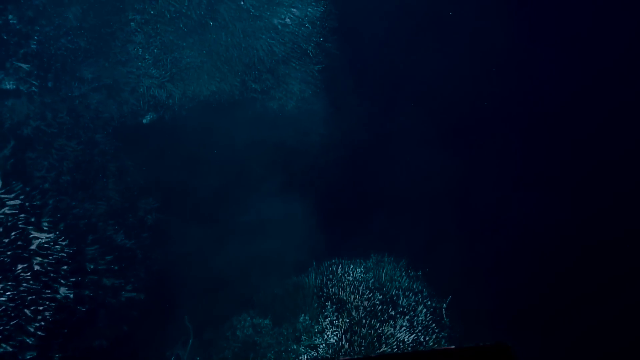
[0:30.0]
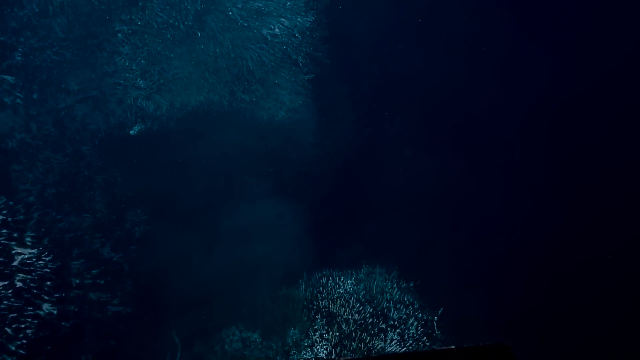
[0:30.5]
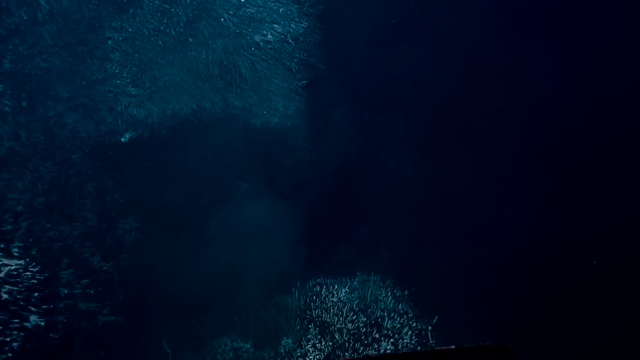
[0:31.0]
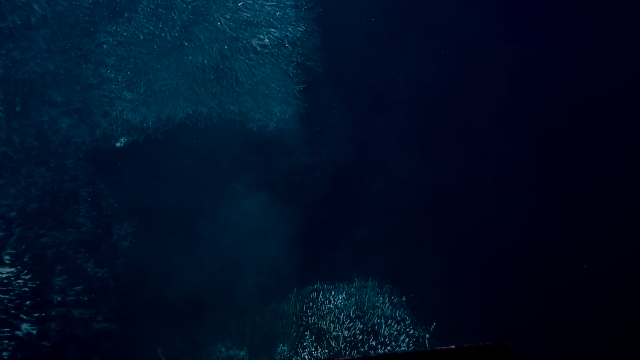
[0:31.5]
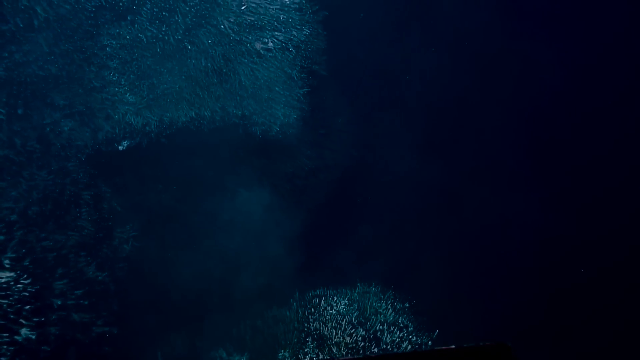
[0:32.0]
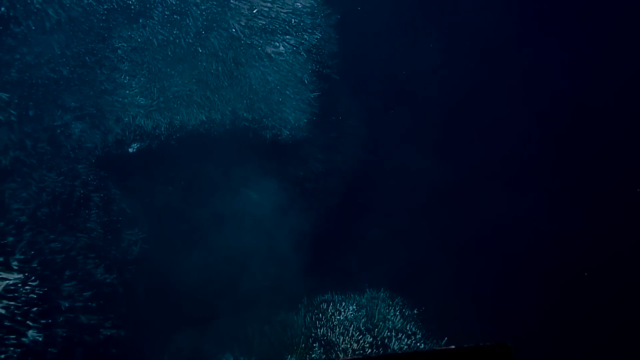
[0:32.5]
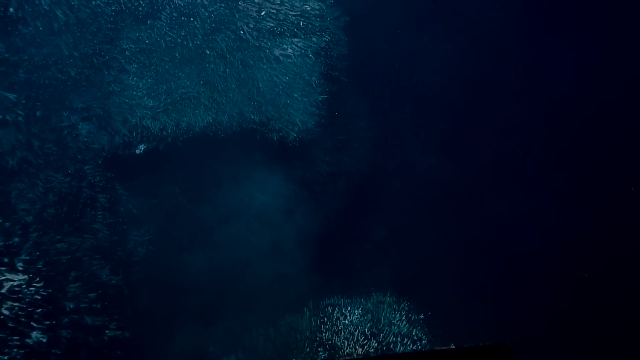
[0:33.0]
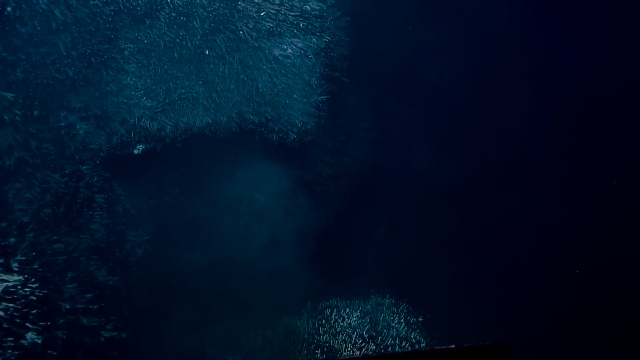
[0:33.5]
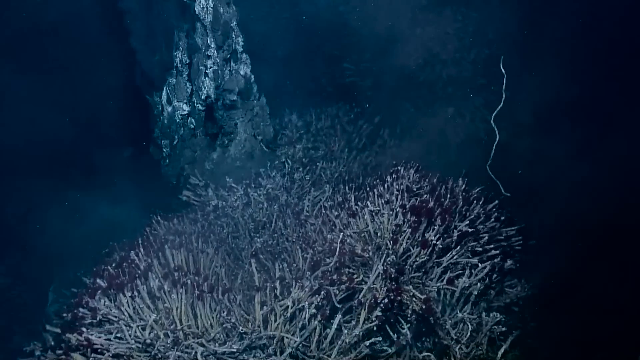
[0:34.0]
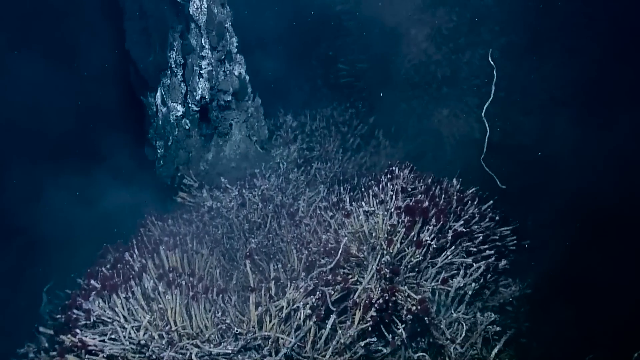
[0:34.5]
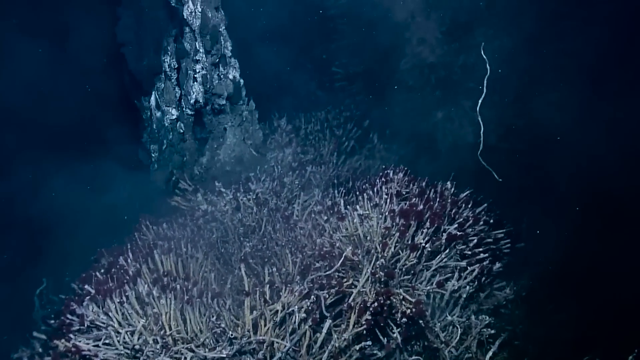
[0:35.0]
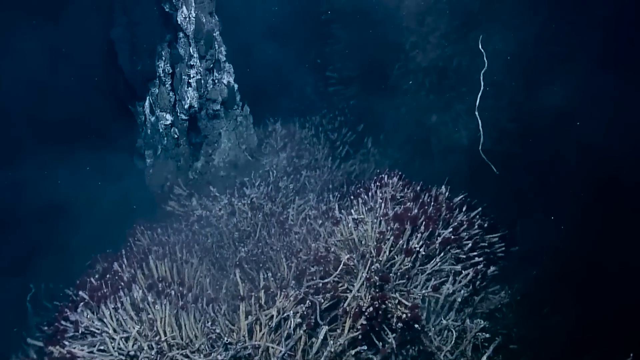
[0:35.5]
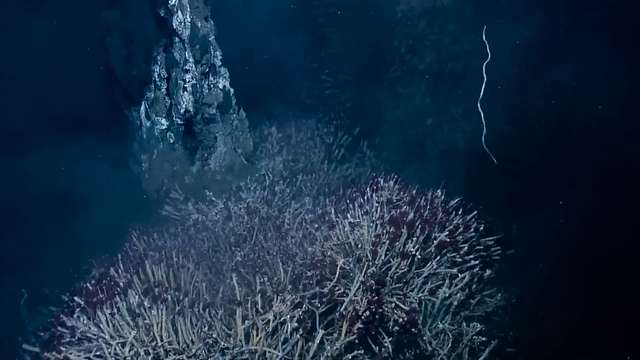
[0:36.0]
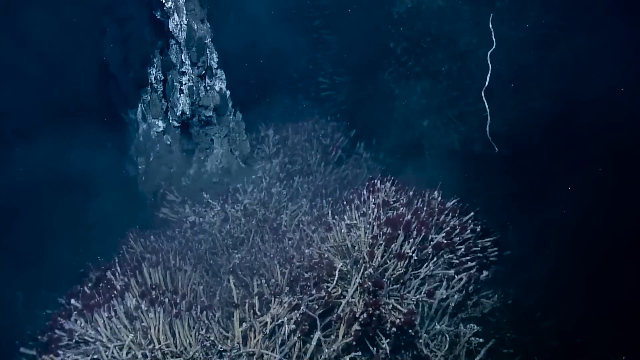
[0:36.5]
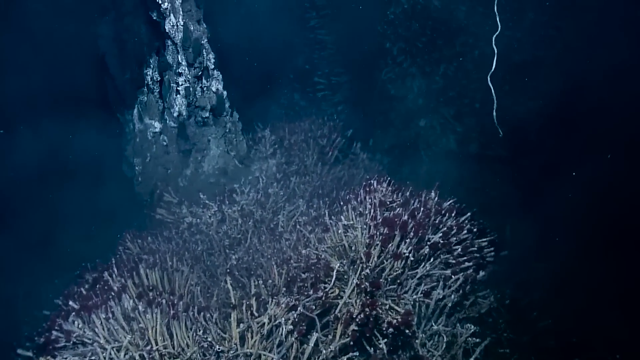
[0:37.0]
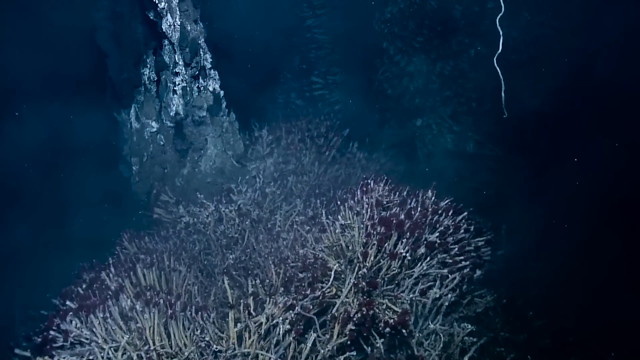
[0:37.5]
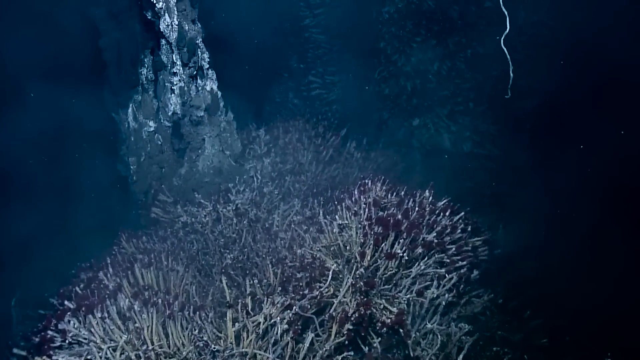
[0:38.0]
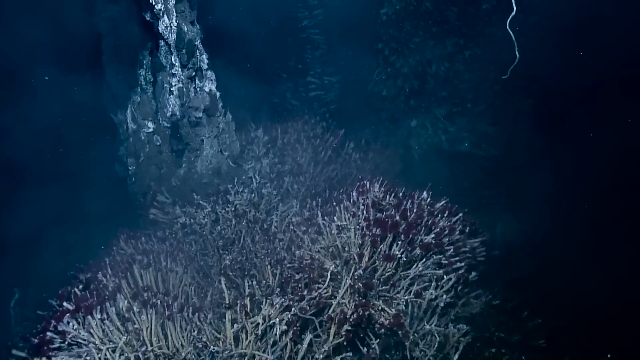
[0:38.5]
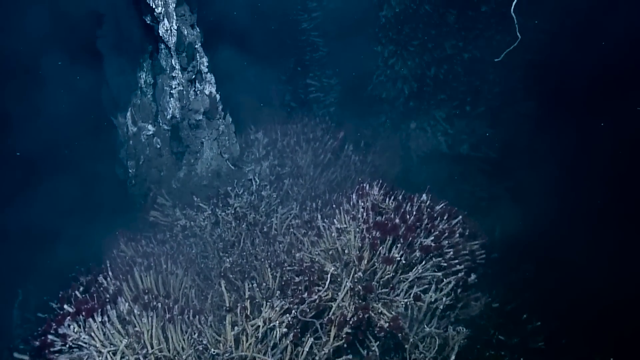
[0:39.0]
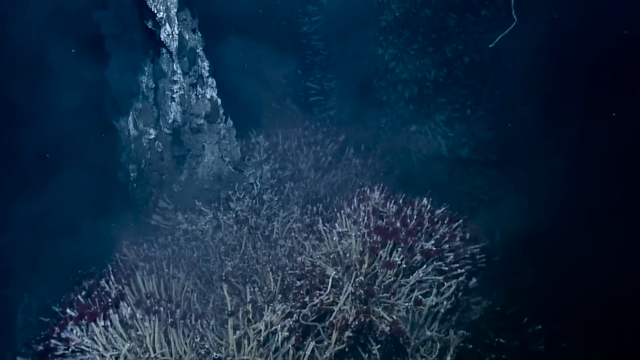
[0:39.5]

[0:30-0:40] Deep down in the ocean, the scene is very dark with some blue light. What looks like coral is at the bottom middle of the frame, and some small fish are on the left. The camera moves to the left and to the right. Then more coral is seen up close; it is white with a little red. A rock just in front of the coral looks silver, brown and dark. A very long, small sea creature moves upwards, and other sea creatures, visible only as white dots, move up as well. More coral is in the background.